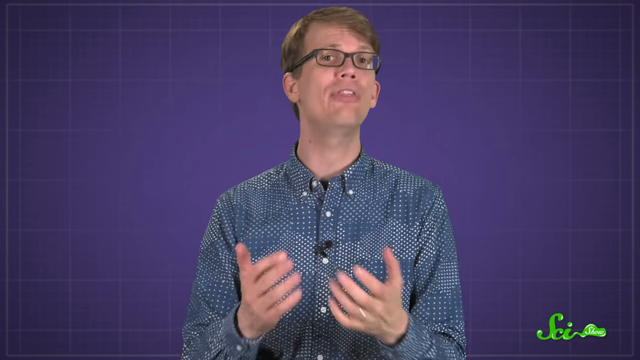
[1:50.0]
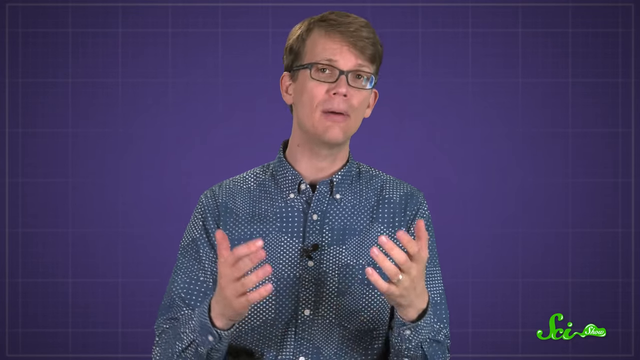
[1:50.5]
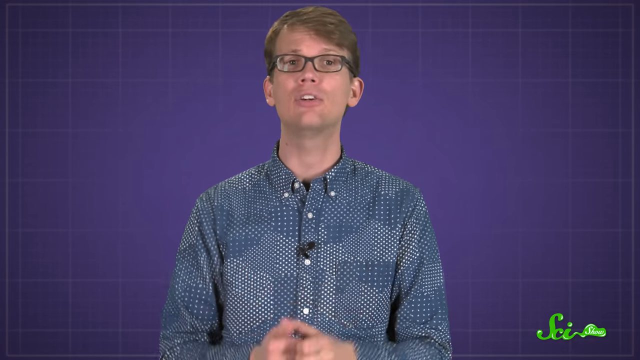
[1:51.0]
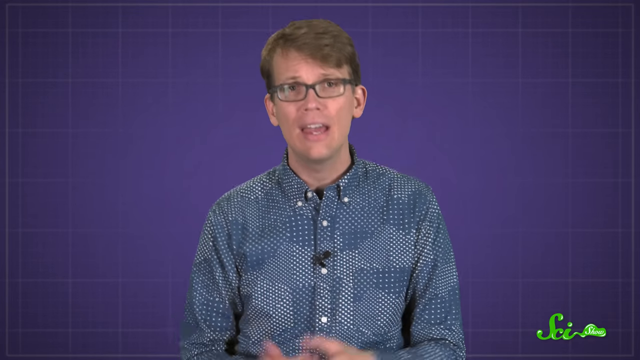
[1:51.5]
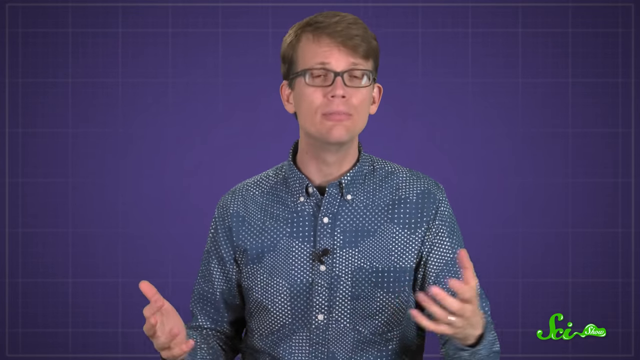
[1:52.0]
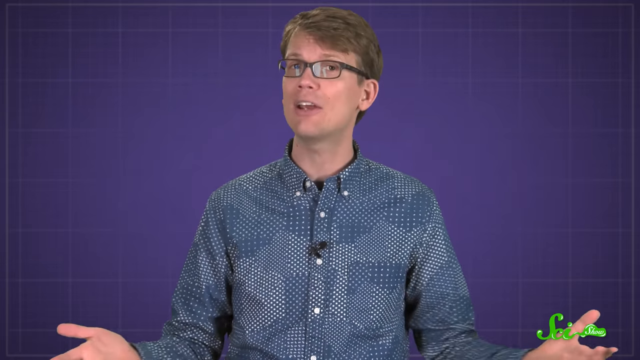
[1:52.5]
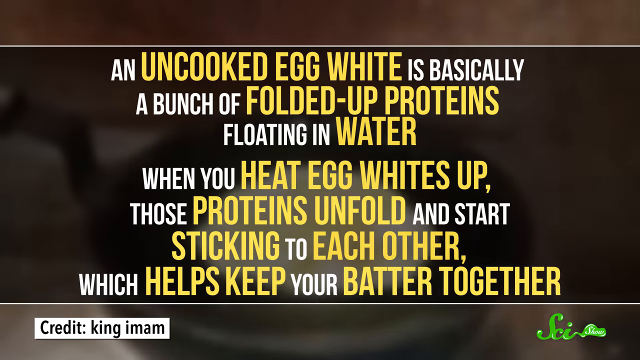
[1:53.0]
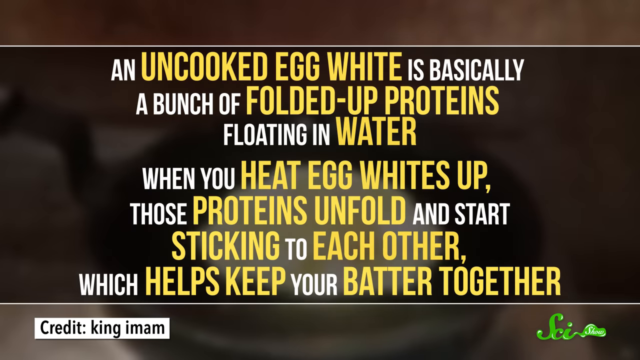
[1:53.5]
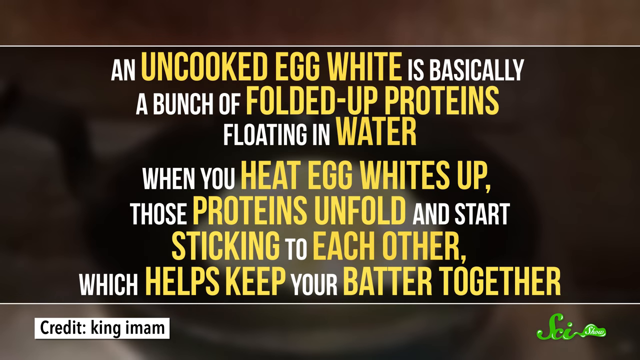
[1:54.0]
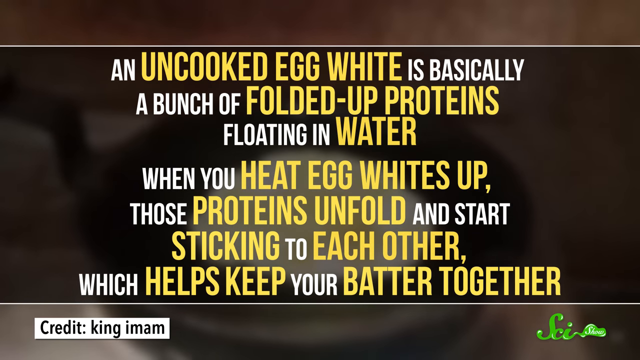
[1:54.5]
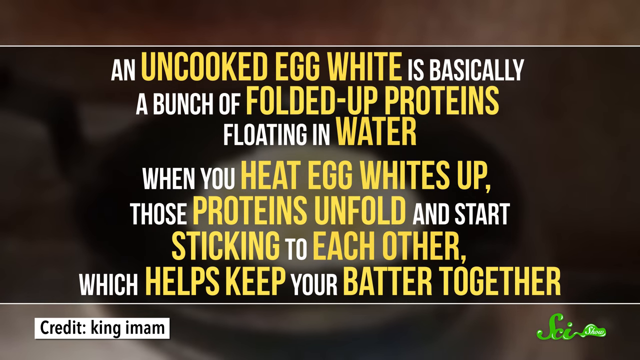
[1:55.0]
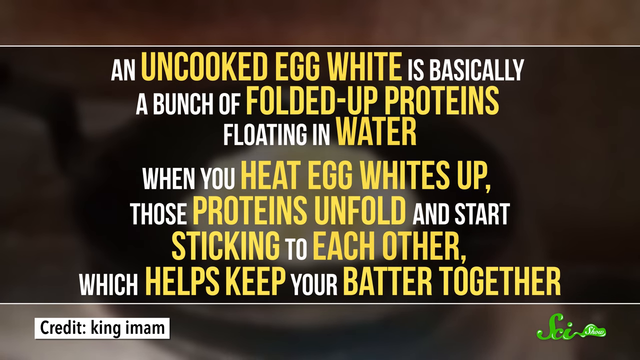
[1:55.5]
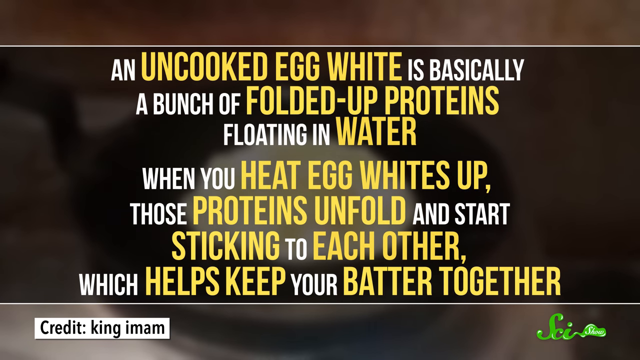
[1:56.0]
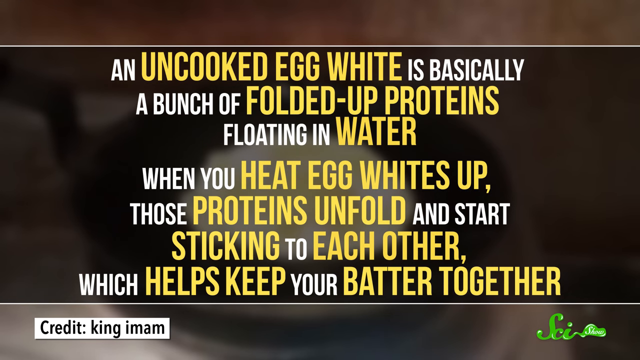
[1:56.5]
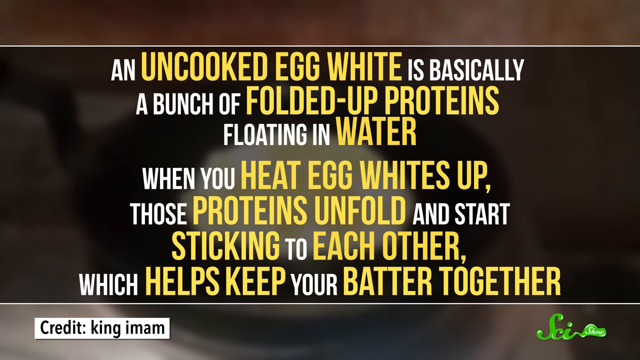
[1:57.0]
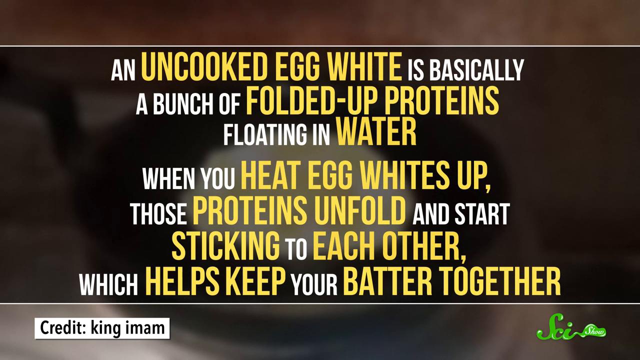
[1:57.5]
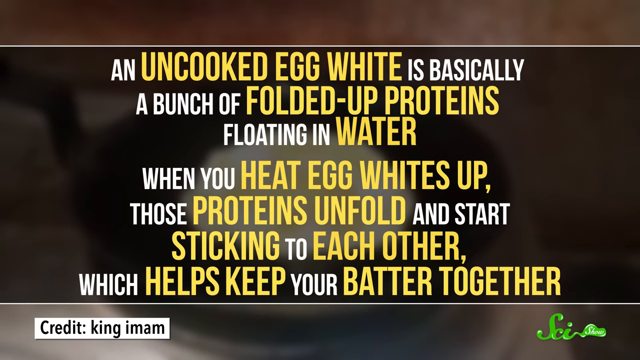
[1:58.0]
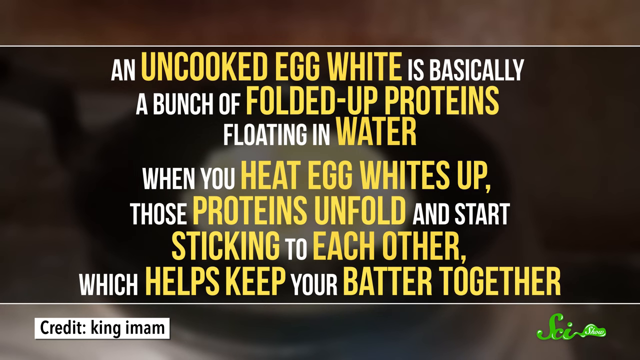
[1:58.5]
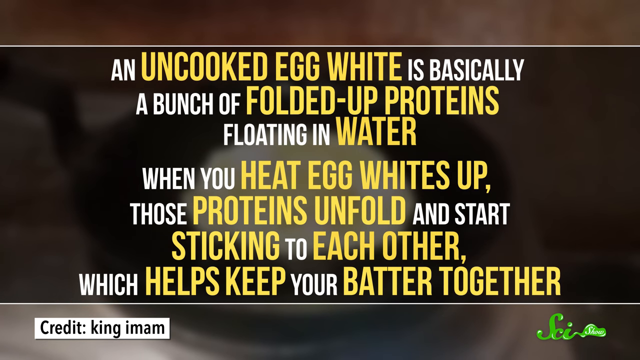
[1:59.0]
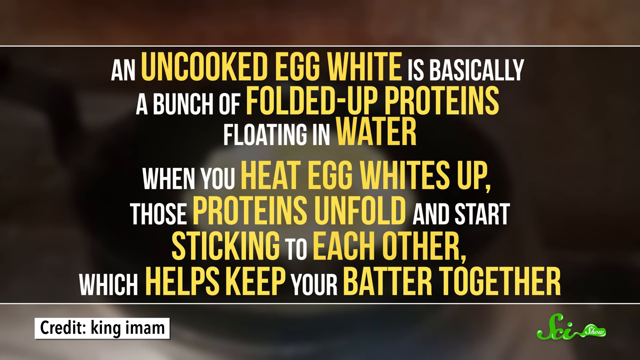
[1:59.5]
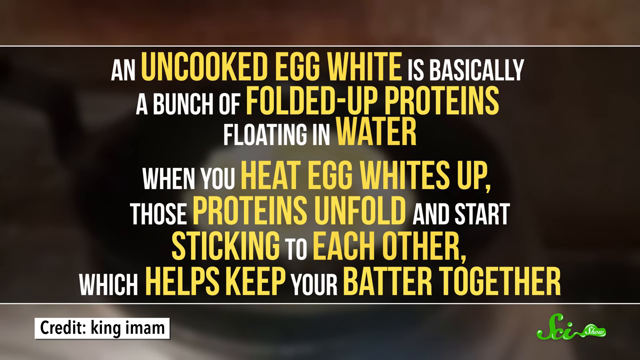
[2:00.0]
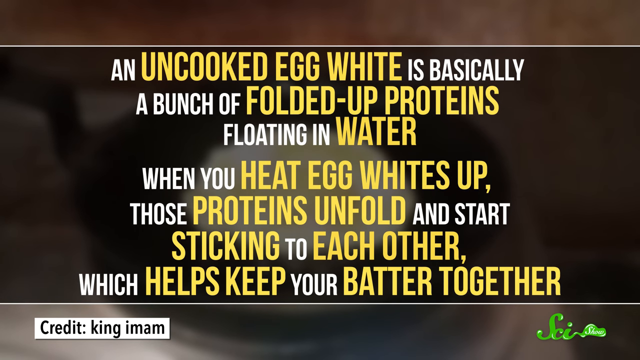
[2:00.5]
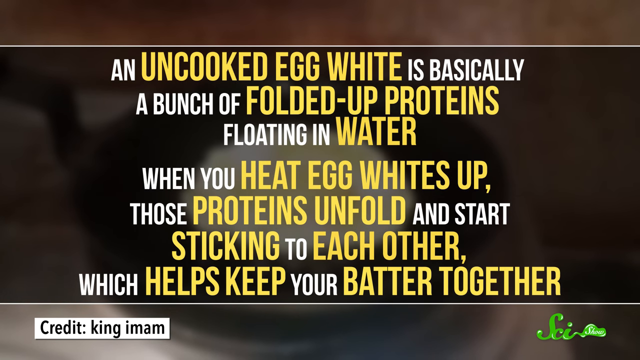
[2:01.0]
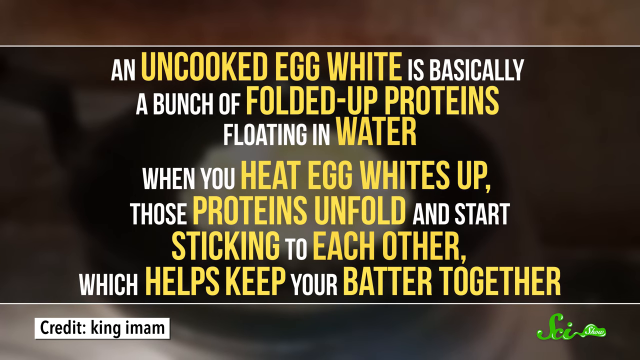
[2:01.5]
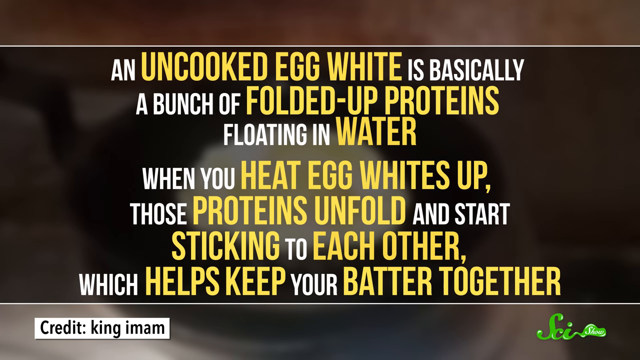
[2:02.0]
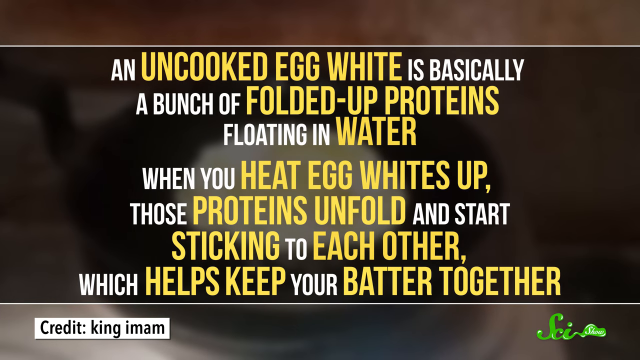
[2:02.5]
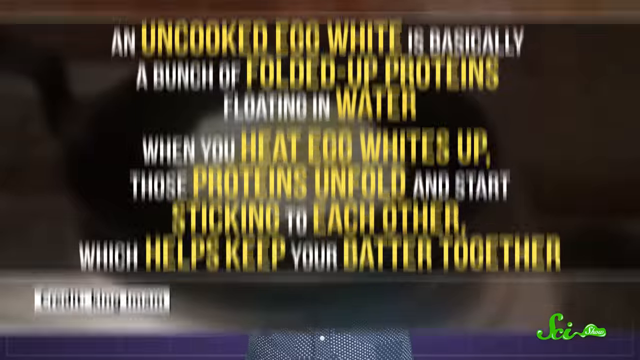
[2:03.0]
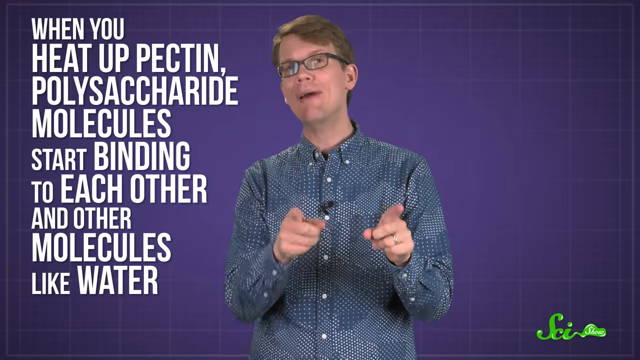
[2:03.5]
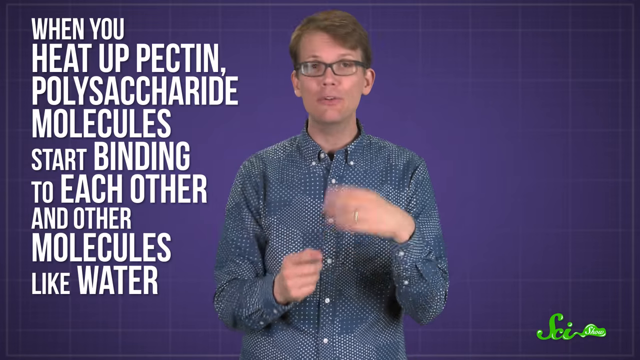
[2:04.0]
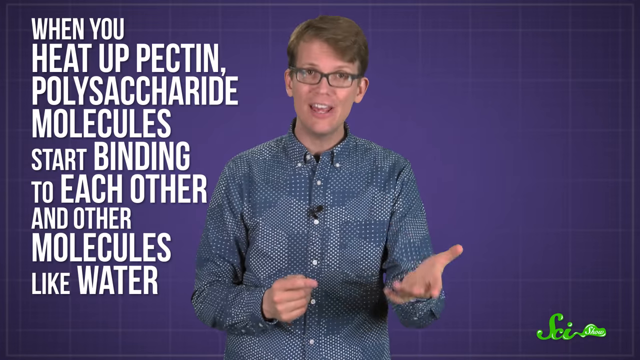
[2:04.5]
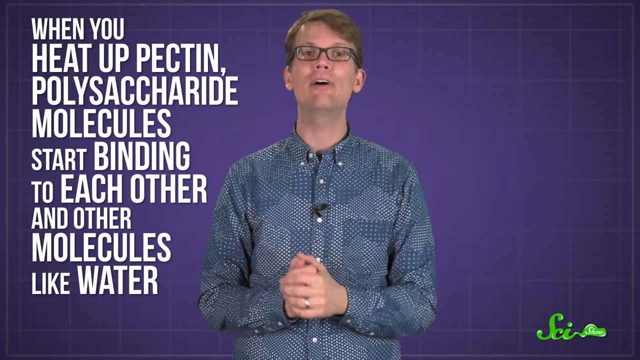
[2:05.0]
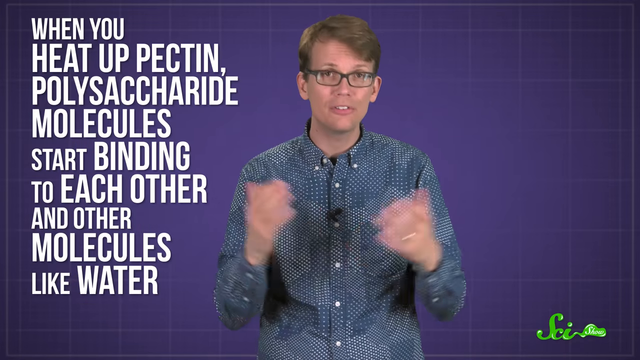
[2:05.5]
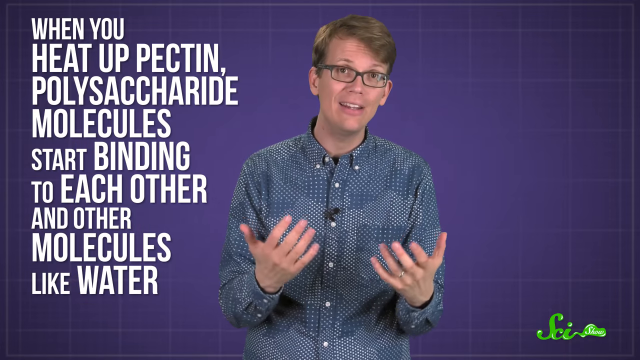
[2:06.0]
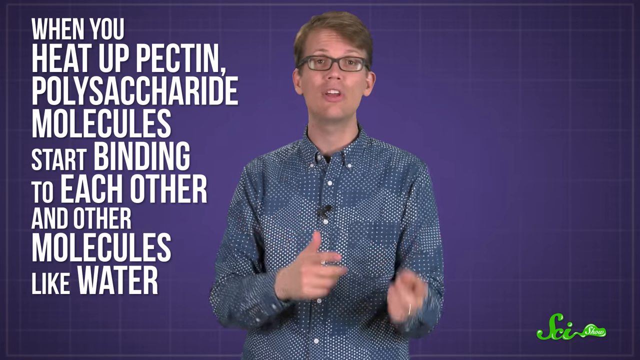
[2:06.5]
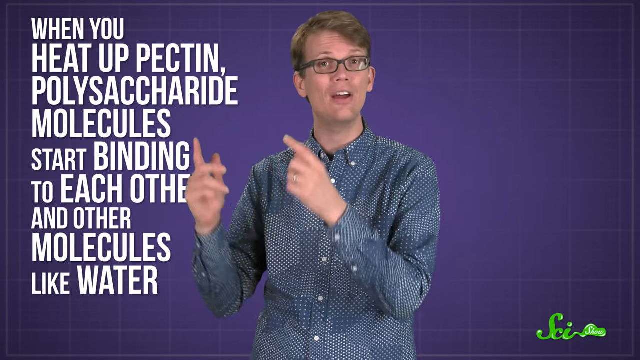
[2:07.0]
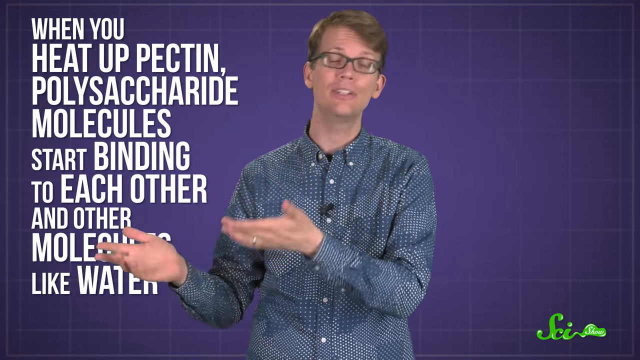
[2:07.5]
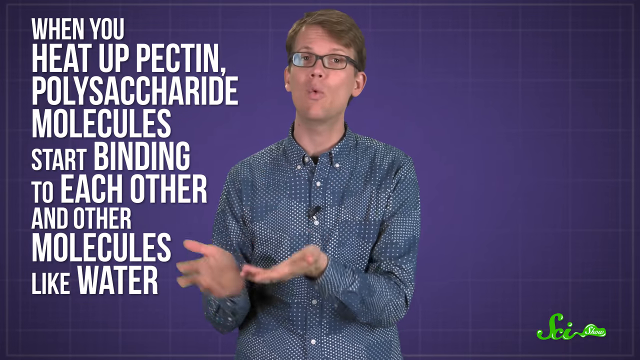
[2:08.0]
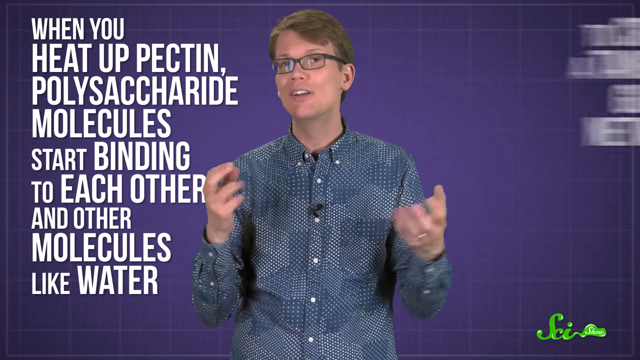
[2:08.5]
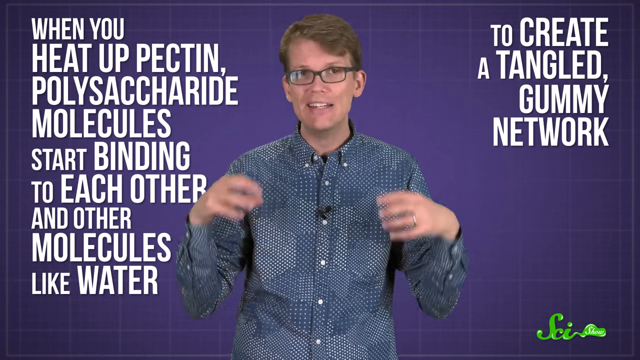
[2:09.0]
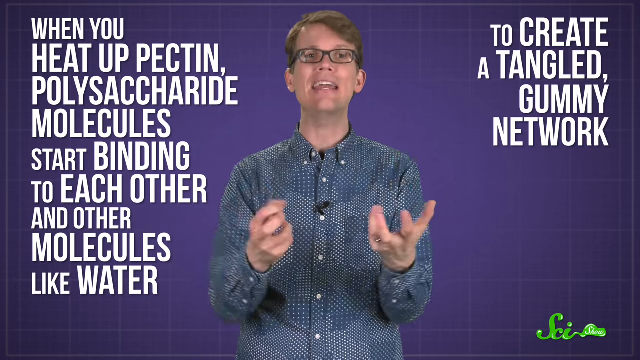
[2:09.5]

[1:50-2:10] The man, in a weird-looking blue button-down shirt, talks. A slide reads "an uncooked egg white is basically a bunch of folded up proteins floating in water. When you heat egg whites up, those proteins unfold and start sticking to each other, which helps keep your batter together." Some of the words are yellow and some are white, with no apparent pattern. Text then reads "When you heat up pectin, polysaccharide molecules start binding to each other, and other molecules like water" and continues "to create a tangled gummy network," while he talks with his hands. Each slide's words are placed in front of a picture of the subject: a picture of pie for pie, a picture of bread for bread.